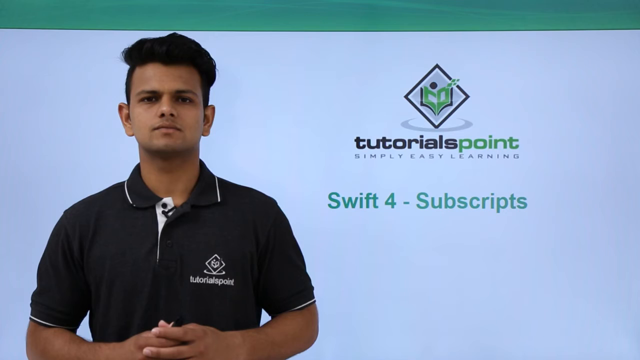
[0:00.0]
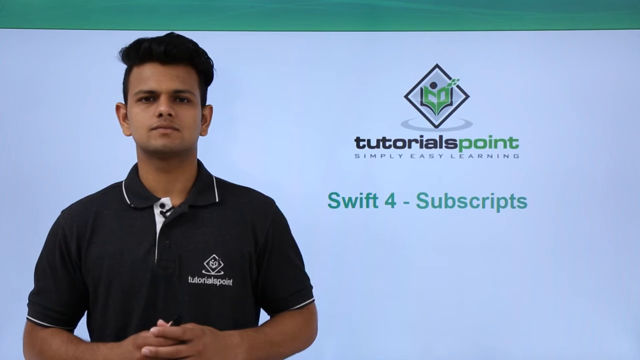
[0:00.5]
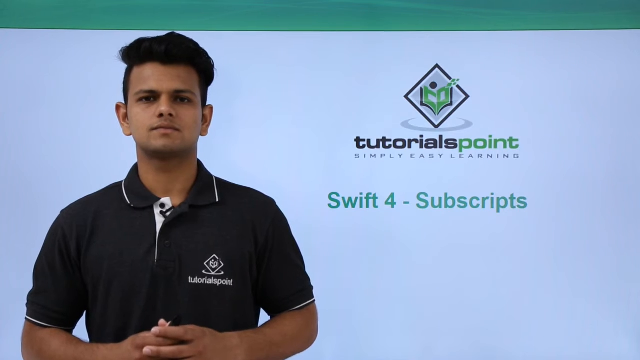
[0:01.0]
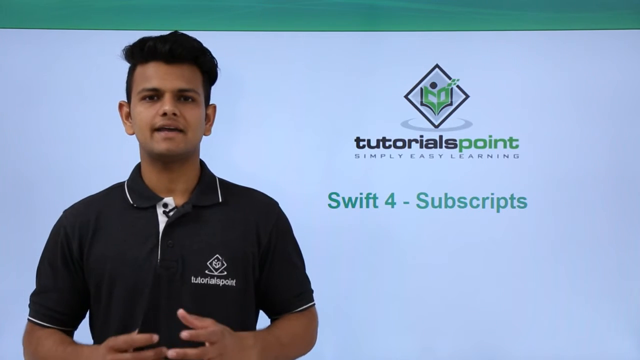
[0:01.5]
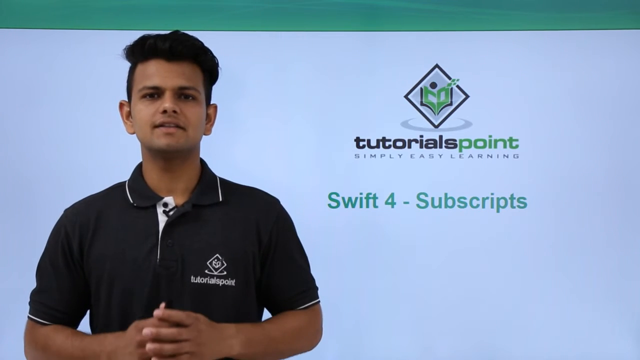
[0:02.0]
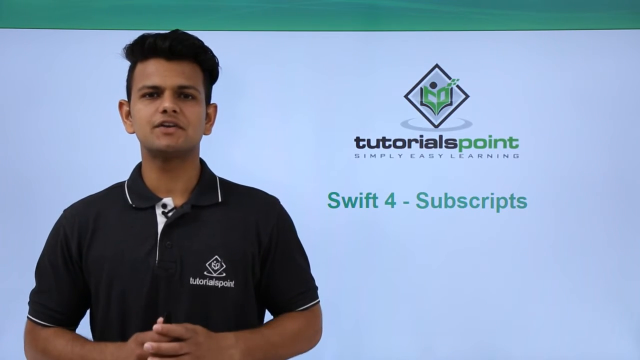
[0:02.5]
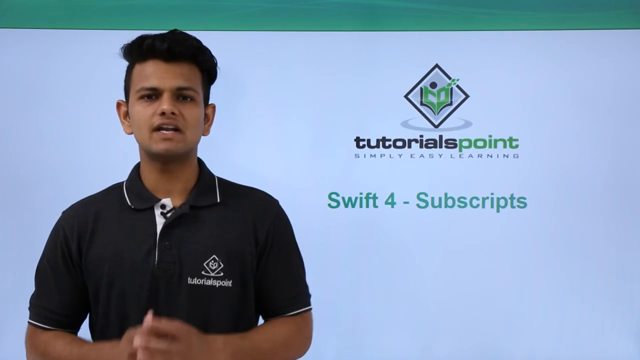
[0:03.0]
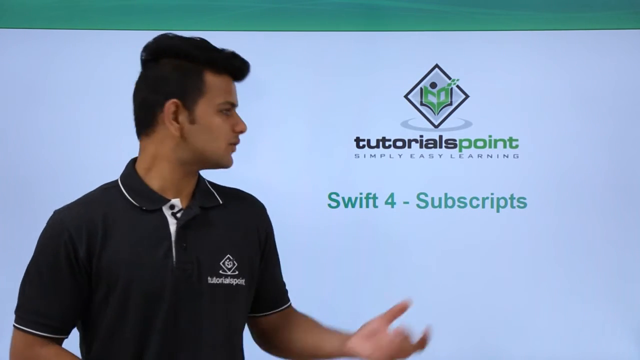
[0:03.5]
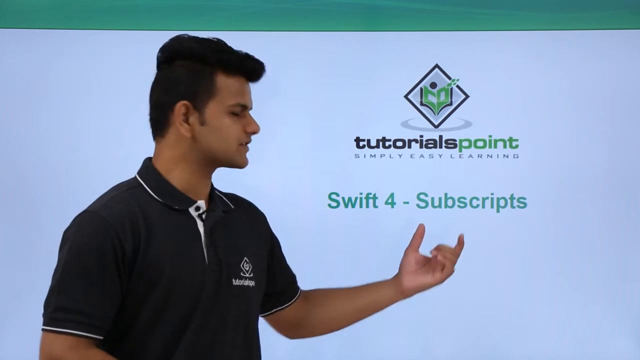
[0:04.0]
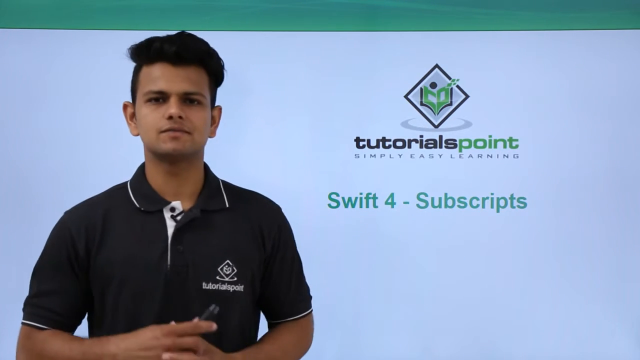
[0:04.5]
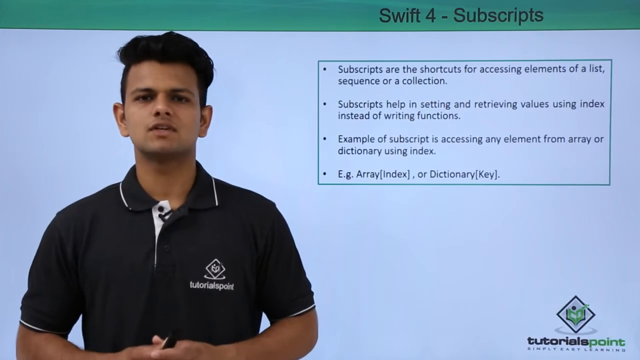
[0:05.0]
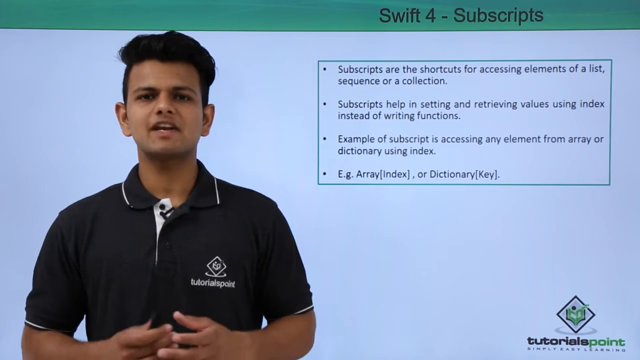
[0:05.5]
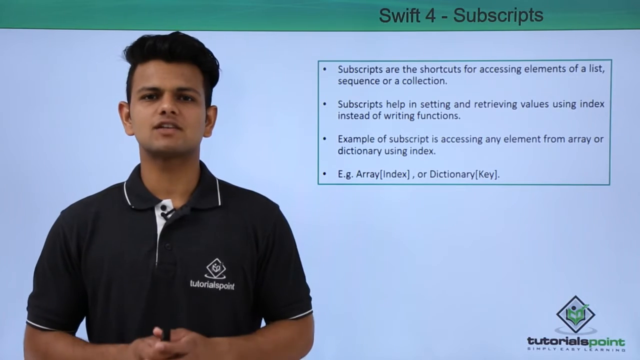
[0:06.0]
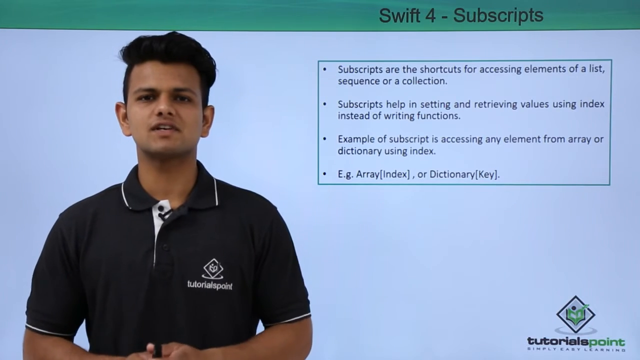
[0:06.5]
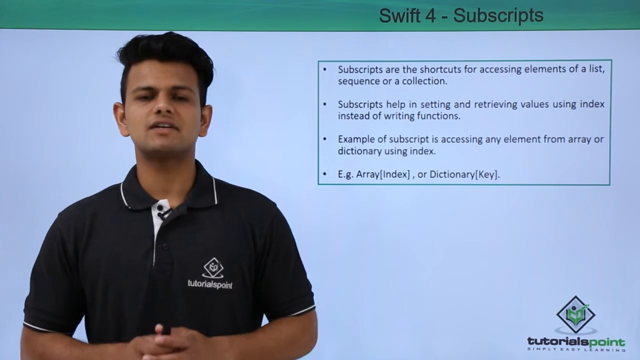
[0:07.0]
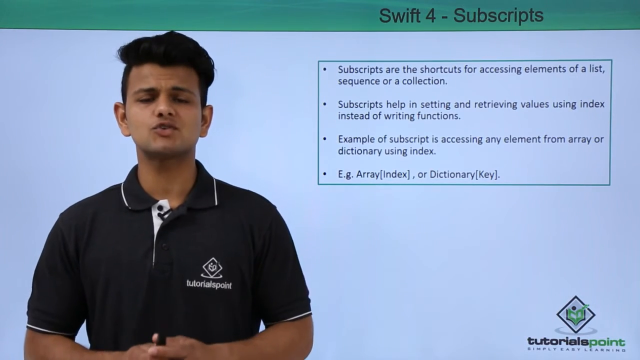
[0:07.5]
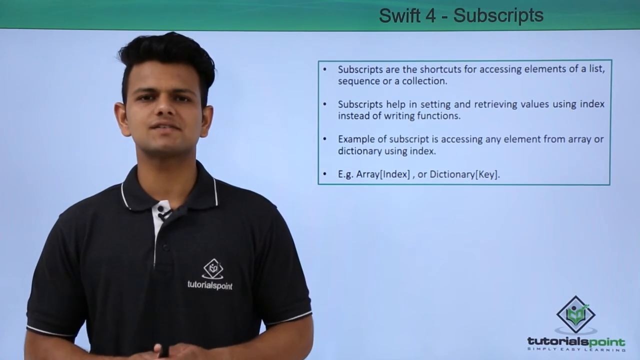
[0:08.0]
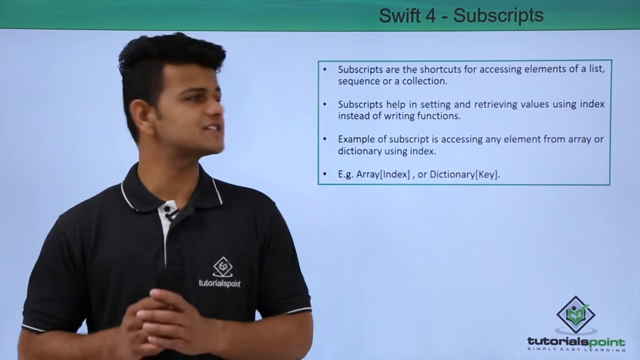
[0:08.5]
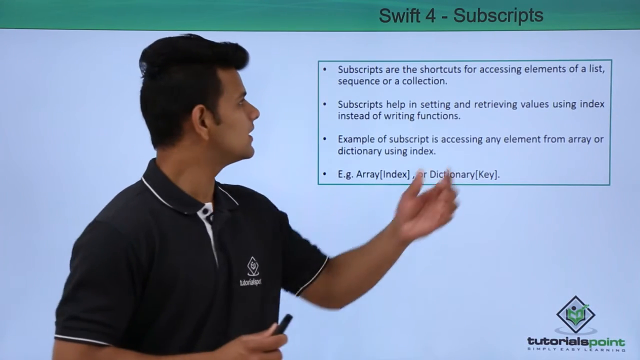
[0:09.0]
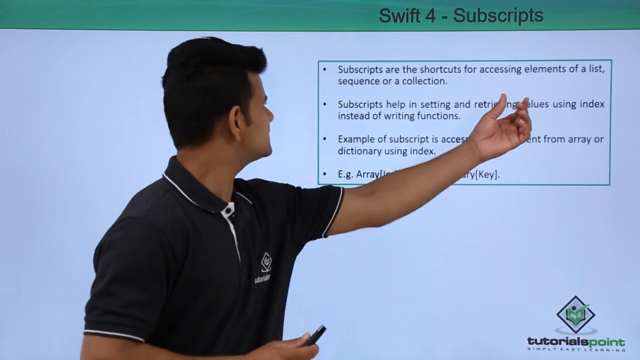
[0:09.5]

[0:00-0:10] A man is speaking in front of a logo that reads "tutorials point" and includes the words "simply easy learning" and "swift 4 subscripts." He appears to be in his early 20s and wears a dark navy polo shirt with a tutorials point logo. He looks to be a professional teaching, presumably to students. There are subheadings and text, and the background is green and looks very hazy. A logo of a cube appears twice: it is green, with a dot, in a diamond shape, shown first on the right side of the page and then on the left side of the man's polo shirt.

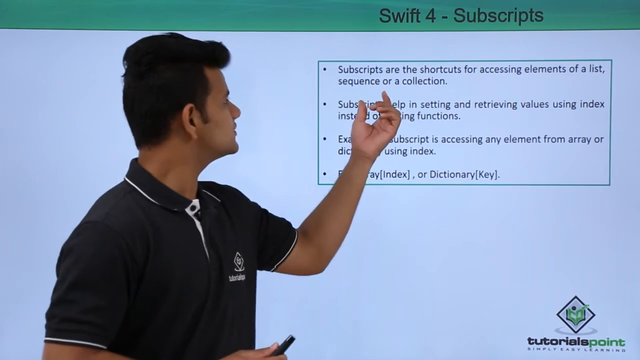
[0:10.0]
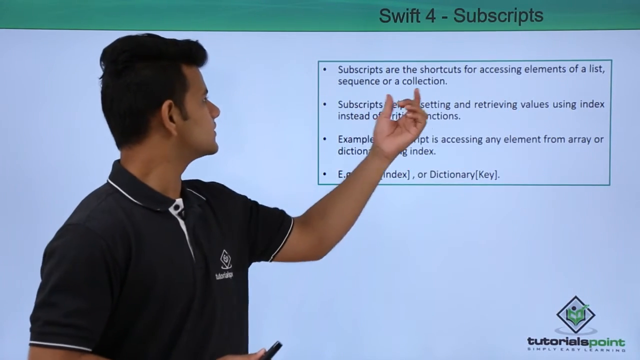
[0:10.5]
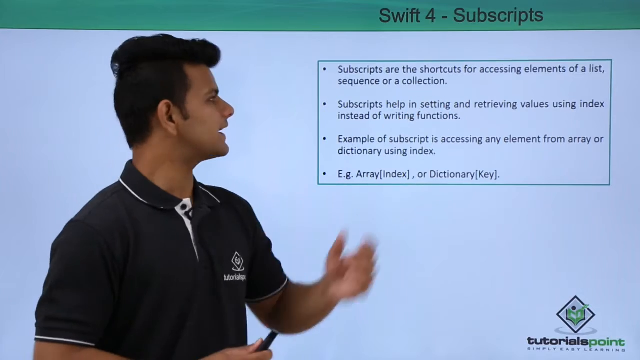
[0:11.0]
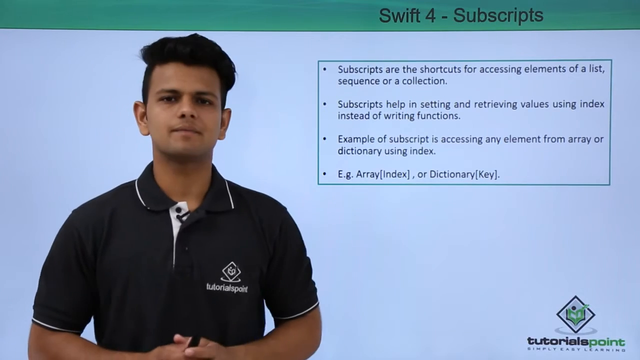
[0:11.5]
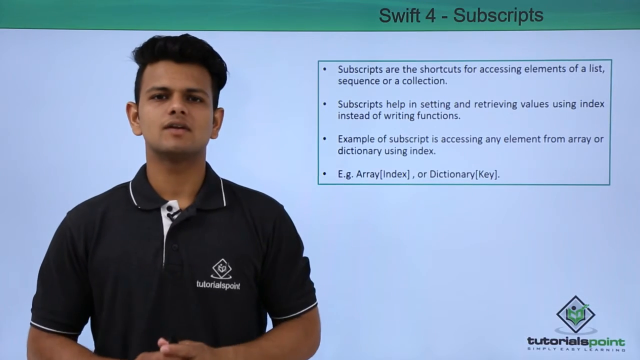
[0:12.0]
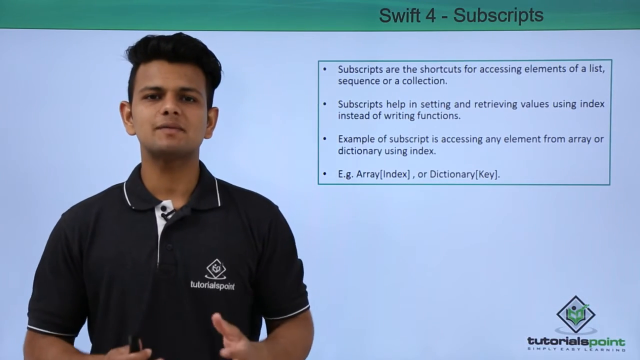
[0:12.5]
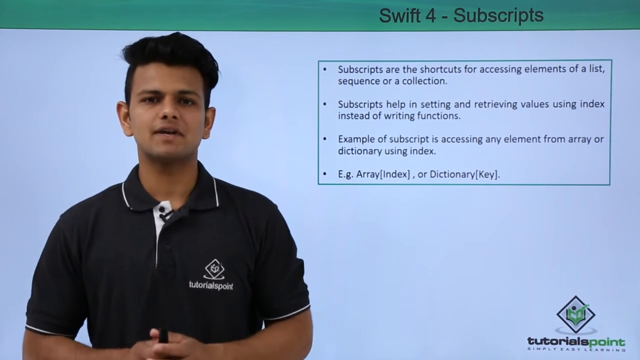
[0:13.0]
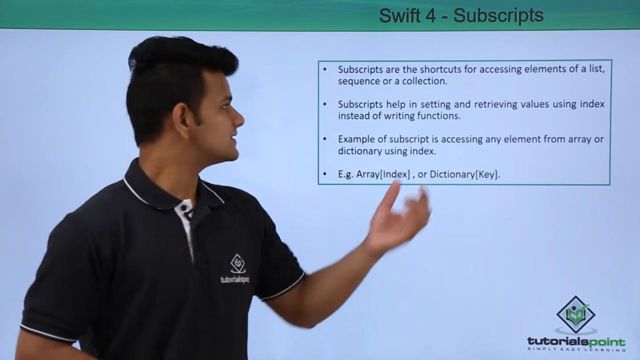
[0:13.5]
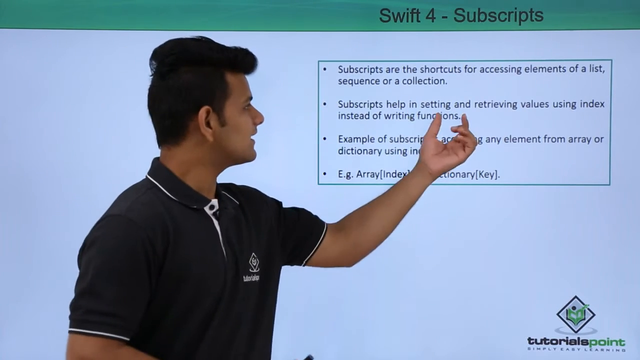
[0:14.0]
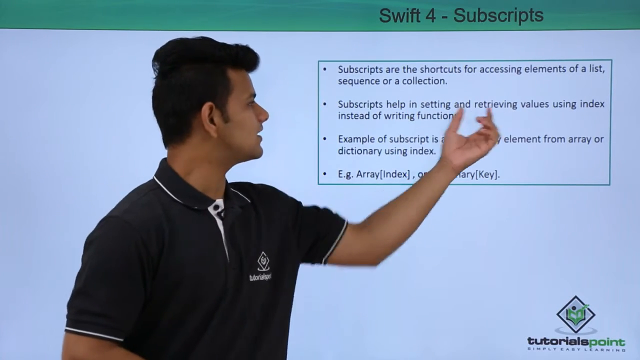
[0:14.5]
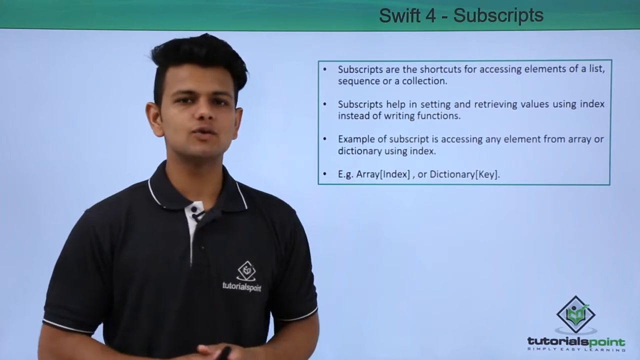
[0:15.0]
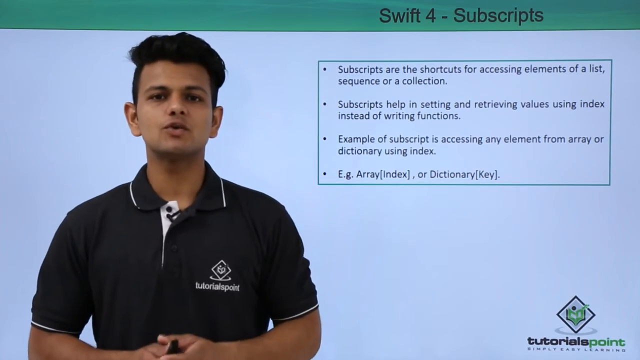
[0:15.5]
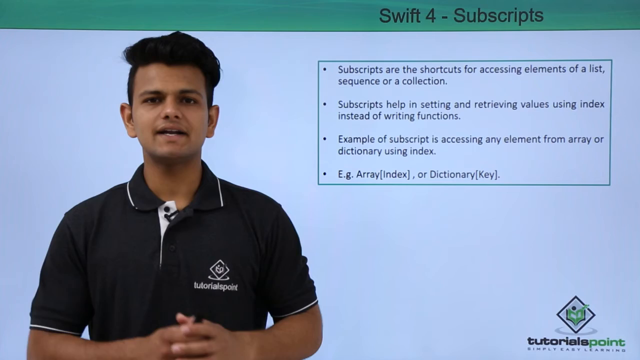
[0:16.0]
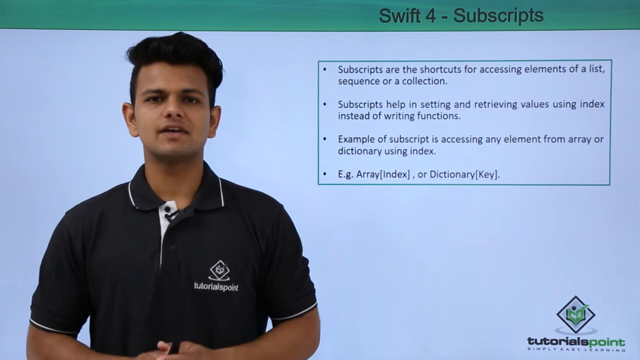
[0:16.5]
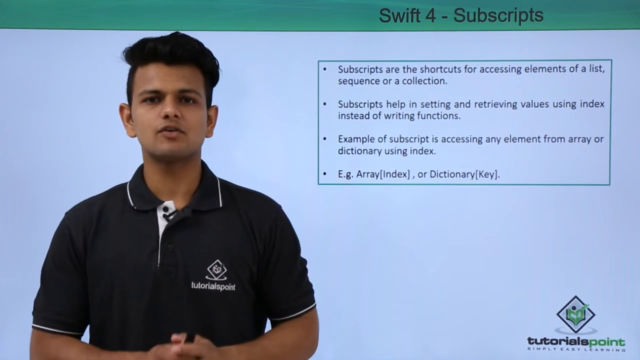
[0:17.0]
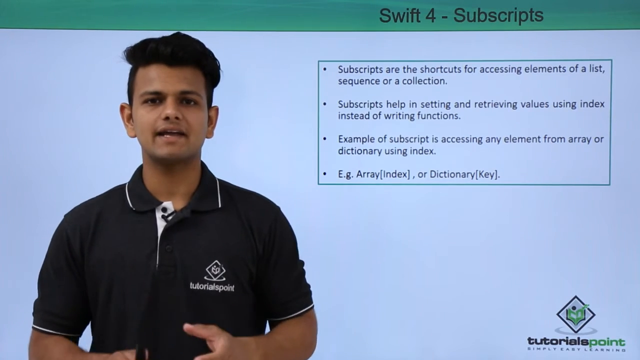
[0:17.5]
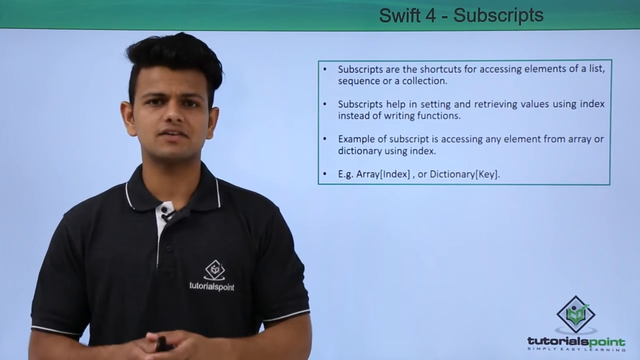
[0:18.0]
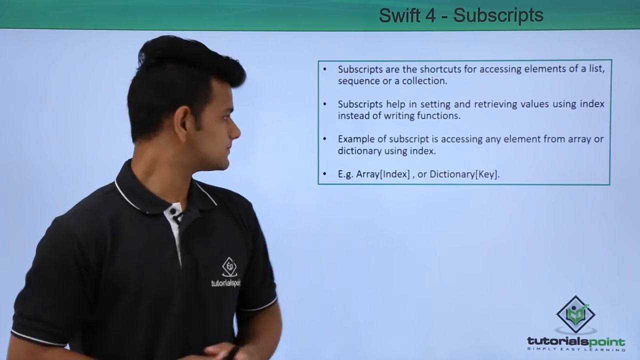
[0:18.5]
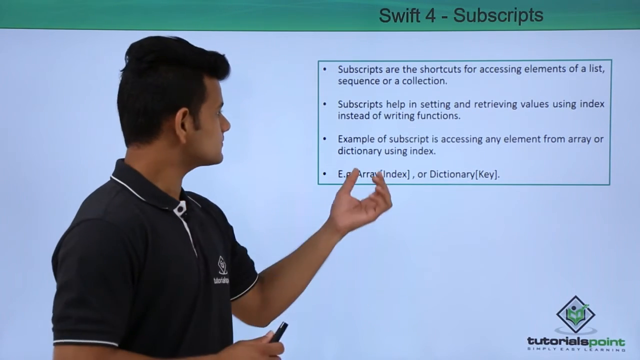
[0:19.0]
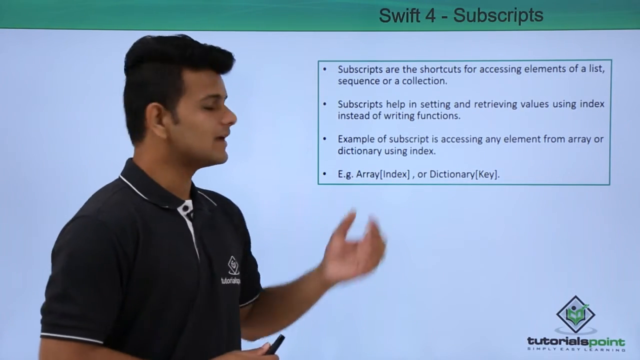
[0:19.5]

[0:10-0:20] The man in the black polo shirt is still talking, and the view switches from the logo page to a page of text on Swift 4 subscripts with four bullet points. The first reads "subscripts are the shortcuts for accessing elements of a list sequence or a collection." Another reads "Subscripts help in setting and retrieving values using index instead of writing functions," and another "Example subscript is accessing any element from array or dictionary using index." Then two different examples of subscripts are given. The background is green with the text "Swift 4 - subscript," and the man seems to be getting into the topic.